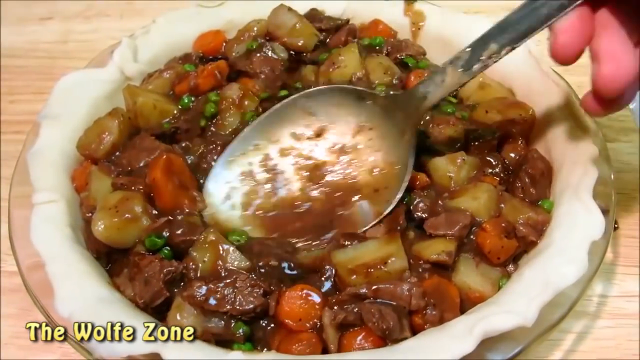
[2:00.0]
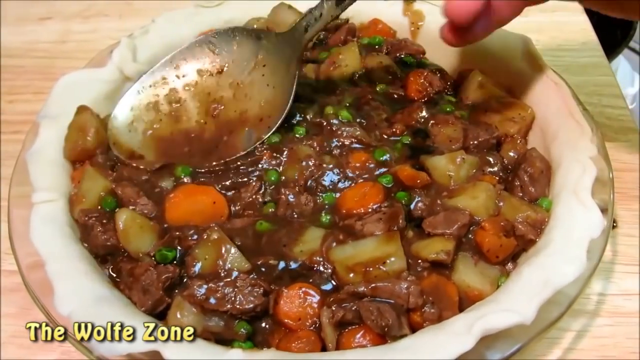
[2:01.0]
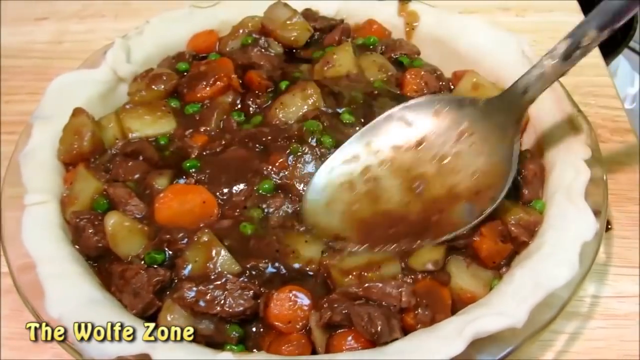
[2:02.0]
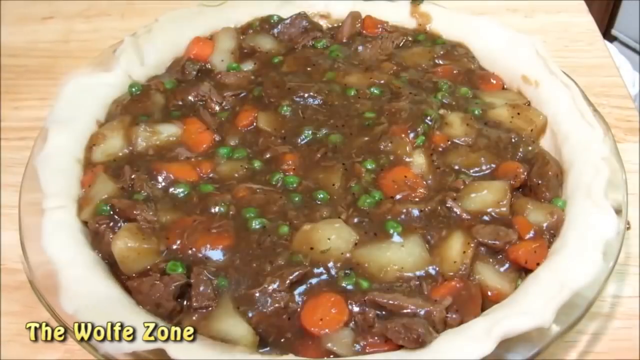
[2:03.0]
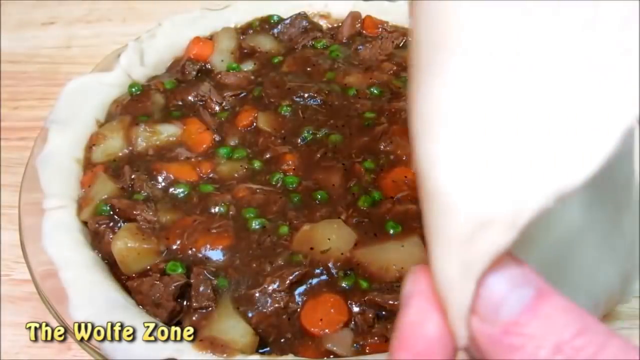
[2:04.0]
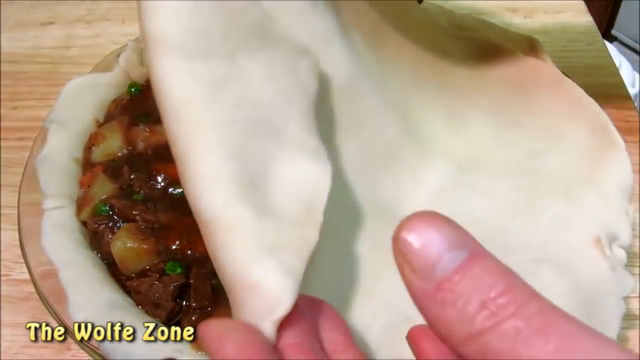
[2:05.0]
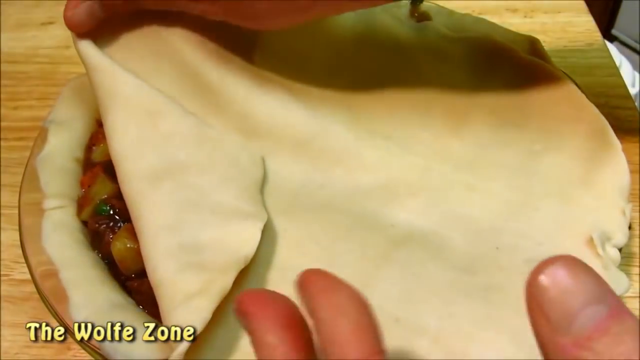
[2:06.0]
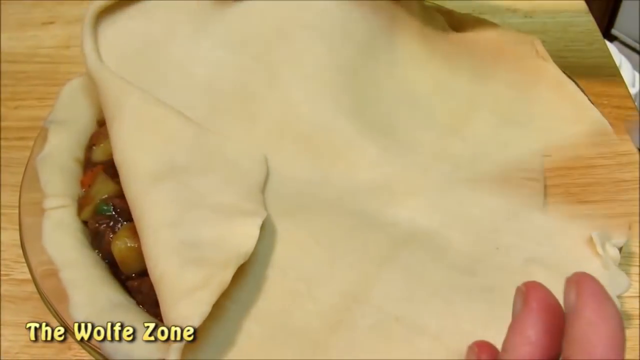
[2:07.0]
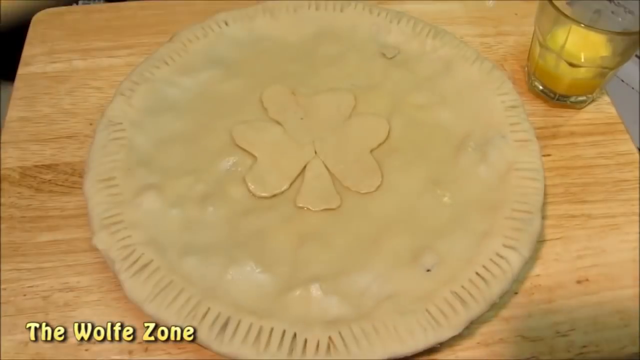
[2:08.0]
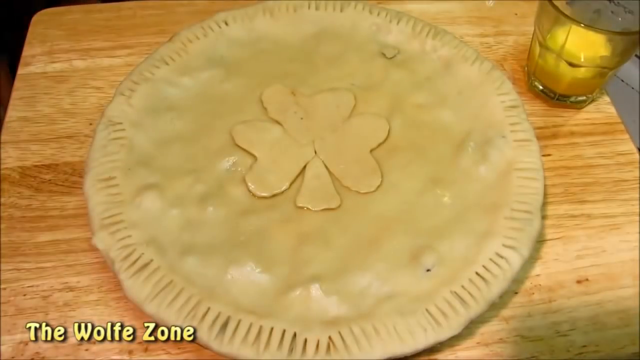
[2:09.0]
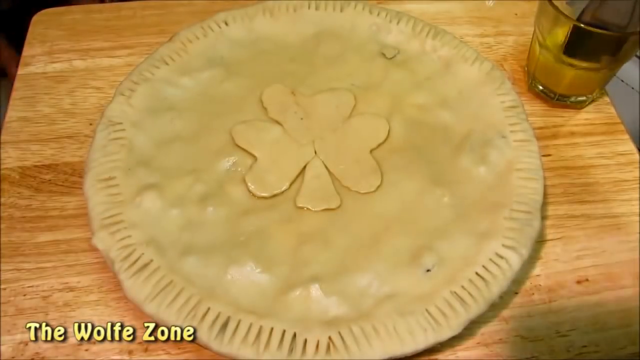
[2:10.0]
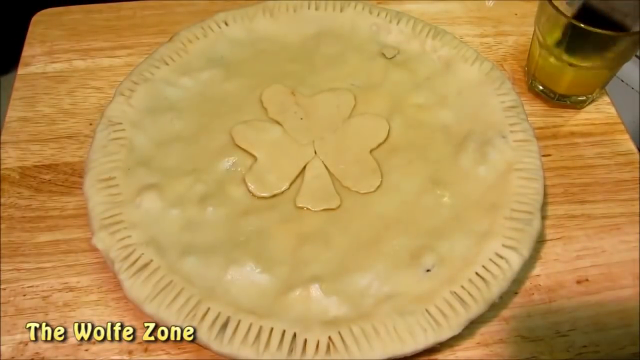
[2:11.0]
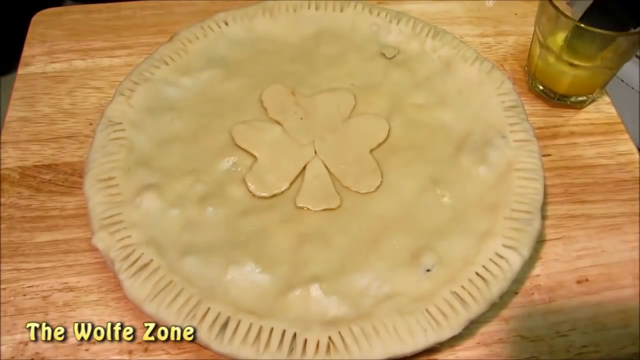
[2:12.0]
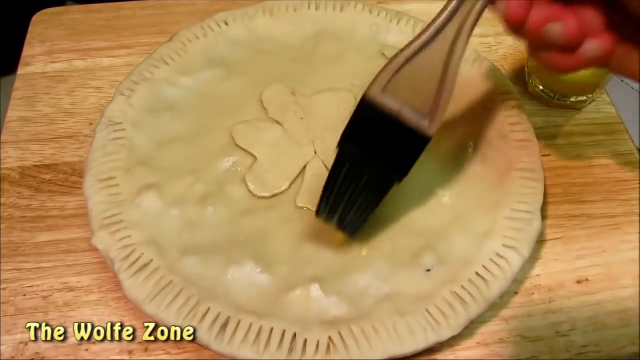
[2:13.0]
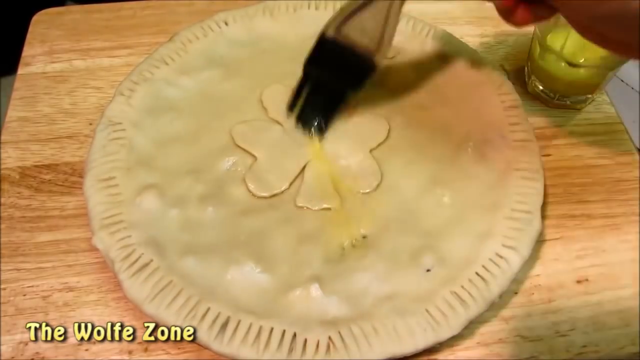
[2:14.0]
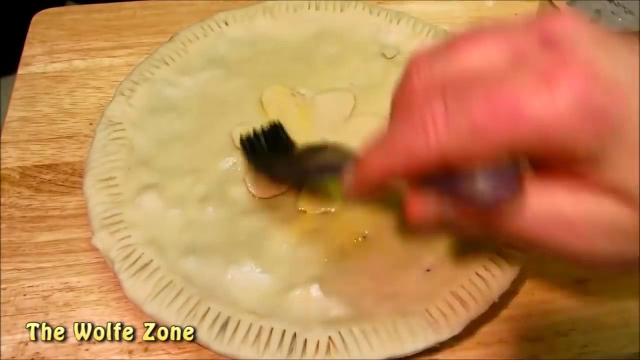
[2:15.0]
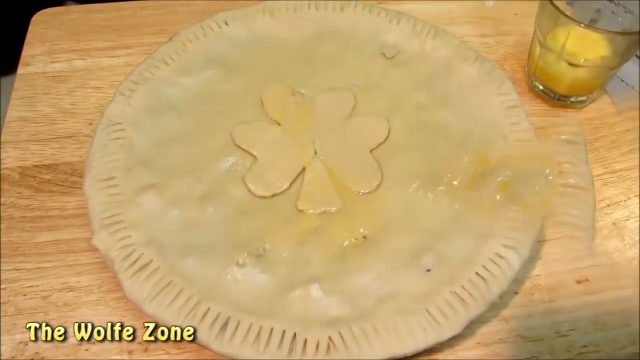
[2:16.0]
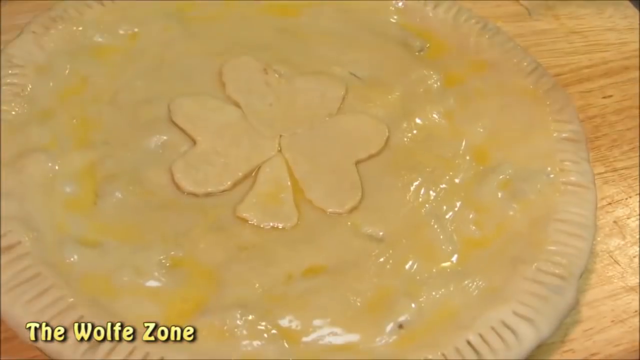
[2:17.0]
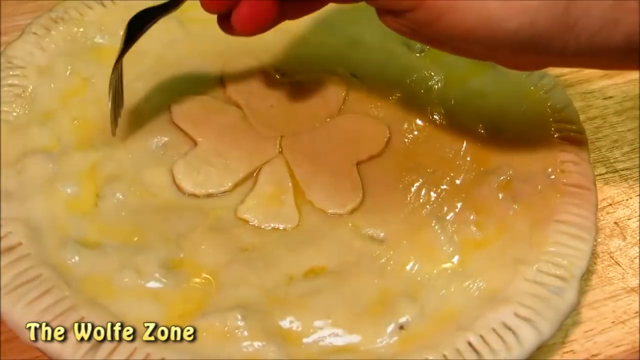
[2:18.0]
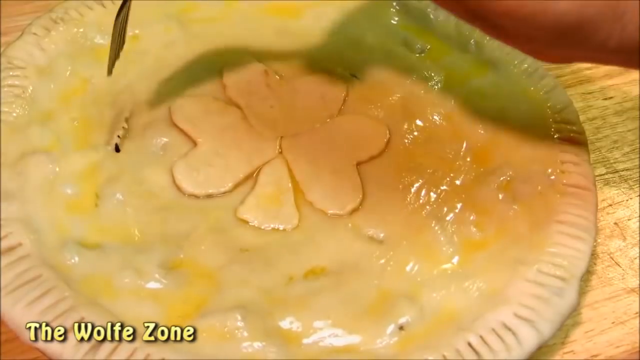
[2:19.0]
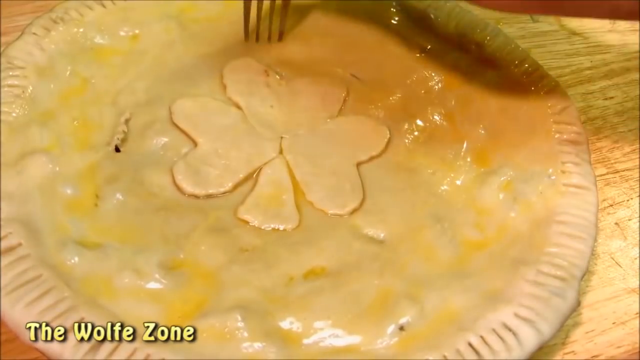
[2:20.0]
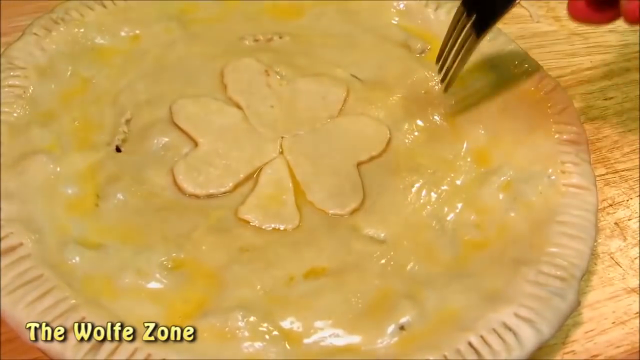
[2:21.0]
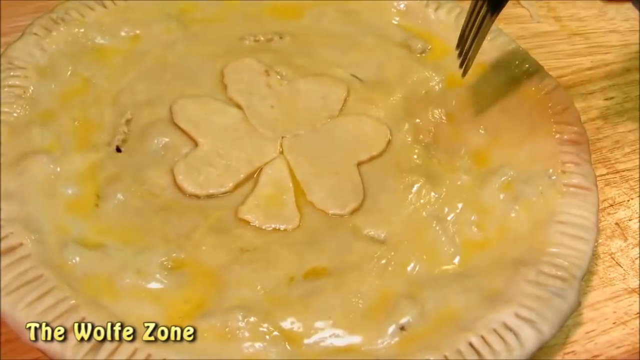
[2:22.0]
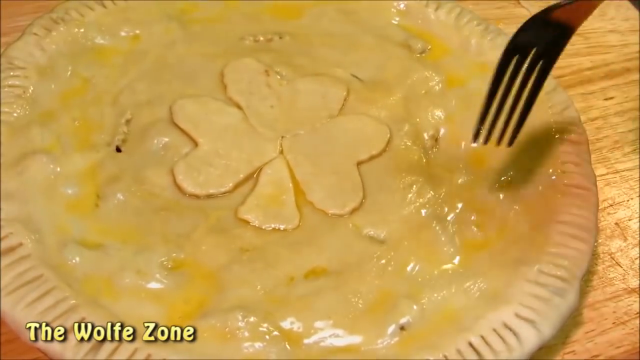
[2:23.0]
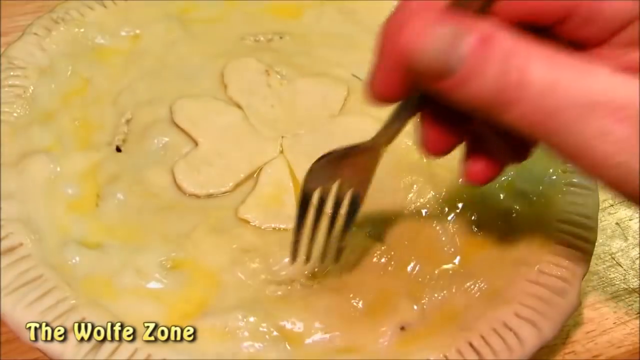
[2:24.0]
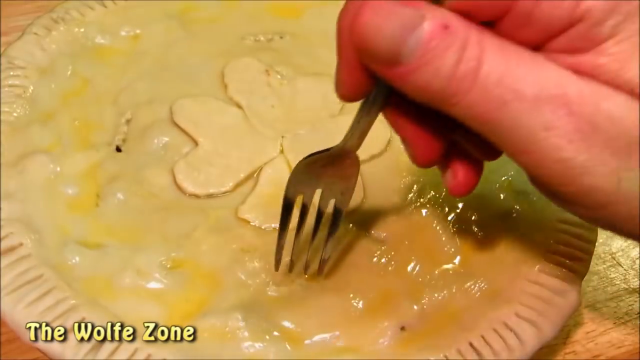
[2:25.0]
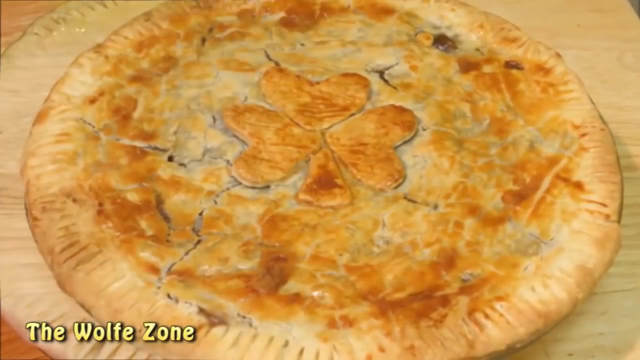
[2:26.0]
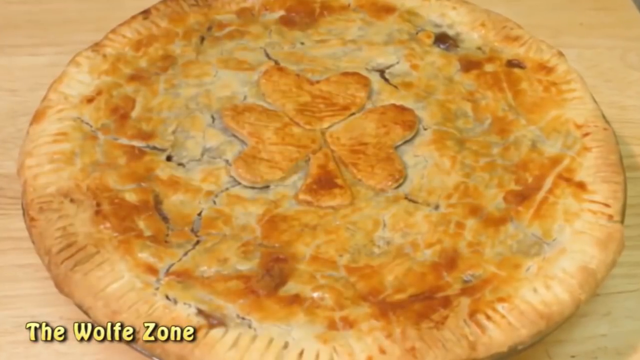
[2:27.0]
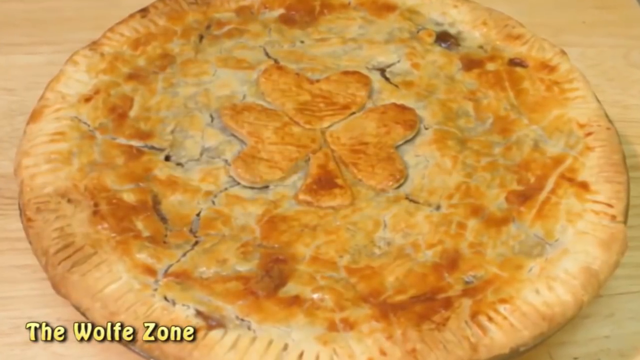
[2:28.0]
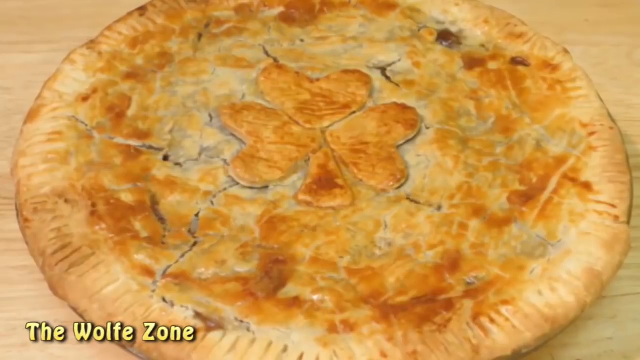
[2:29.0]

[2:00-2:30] Using a large spoon, the man smooths out the filling sitting in the raw crust: a stew of meat, potatoes, carrots, peas and caramelized onions in a sauce. He pats it down and closes off the pie by putting the crust on top, adds a three-leaf clover on top, and gives it a generous egg wash. He then pokes holes in the top with a fork. Finally the pie is shown fully baked, though the inside is not visible.